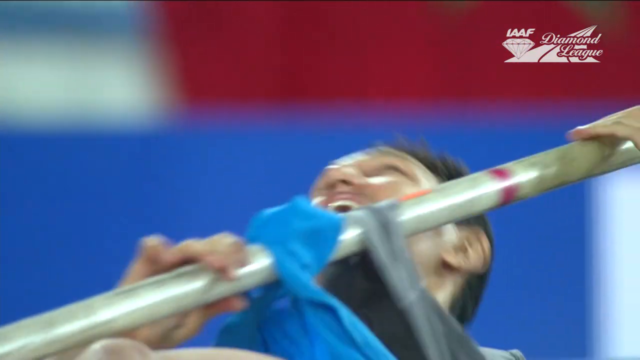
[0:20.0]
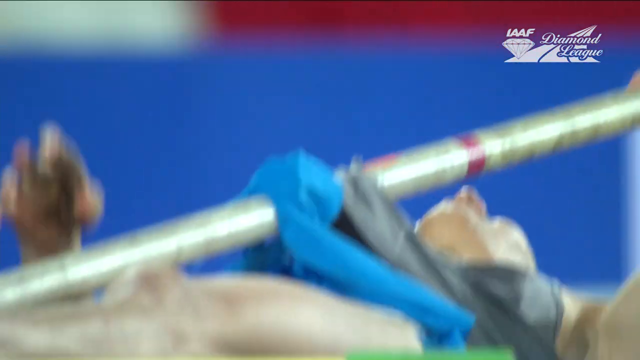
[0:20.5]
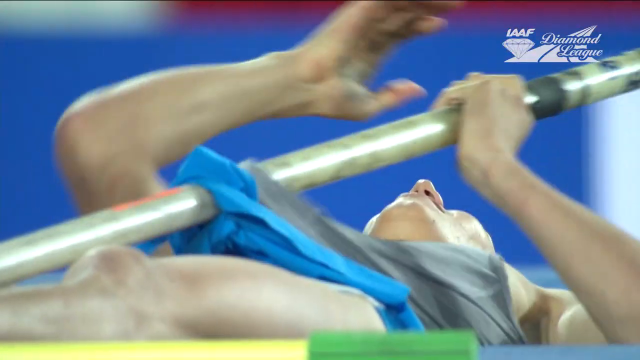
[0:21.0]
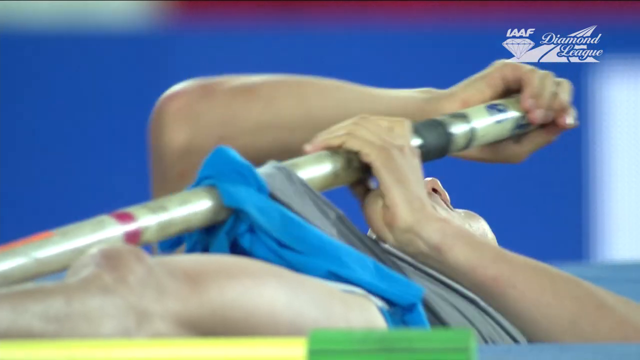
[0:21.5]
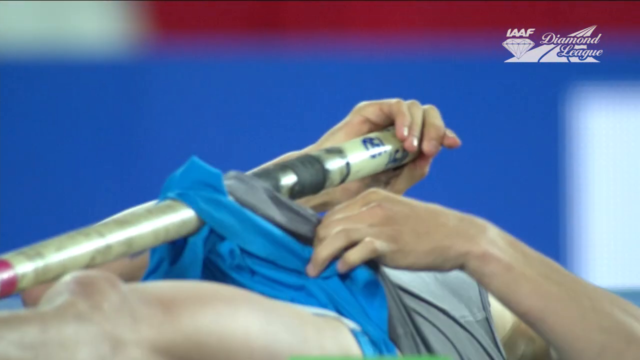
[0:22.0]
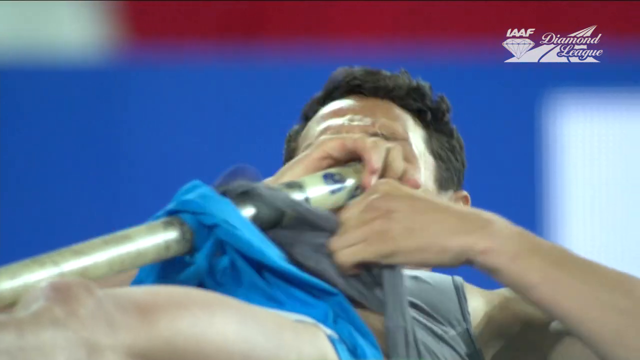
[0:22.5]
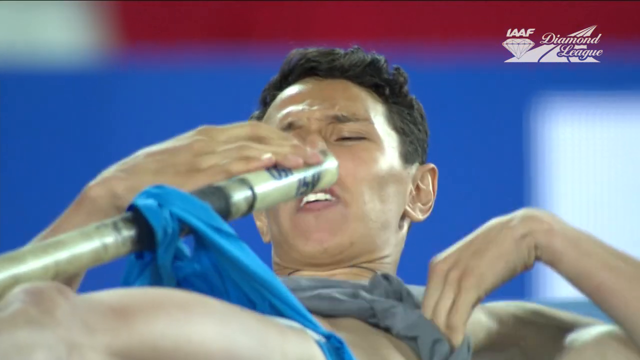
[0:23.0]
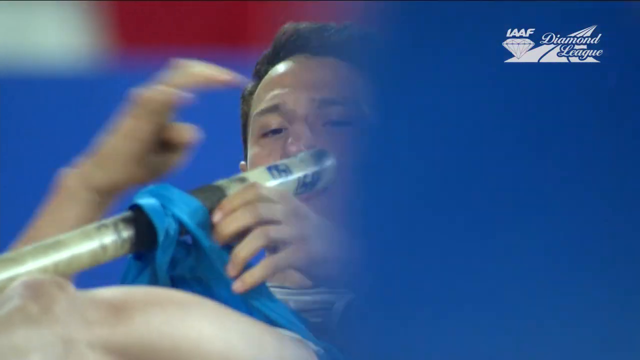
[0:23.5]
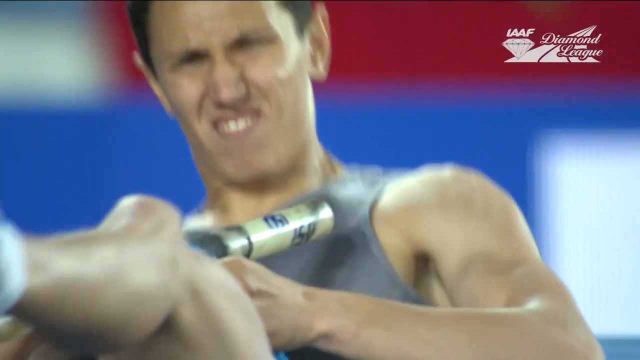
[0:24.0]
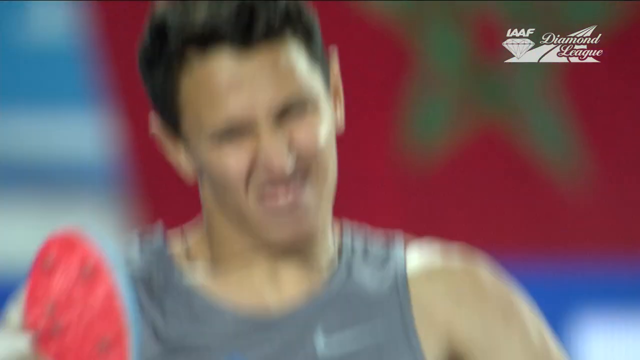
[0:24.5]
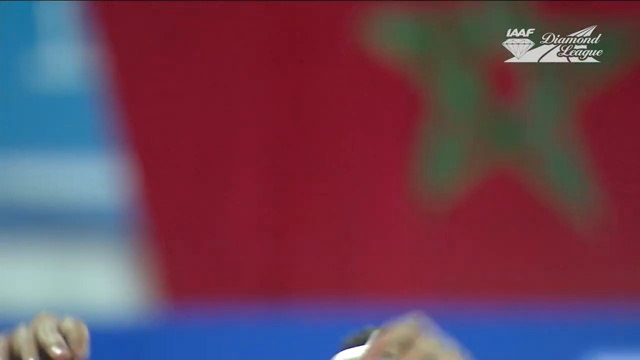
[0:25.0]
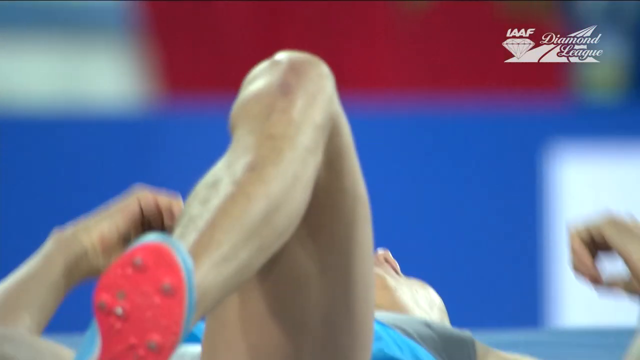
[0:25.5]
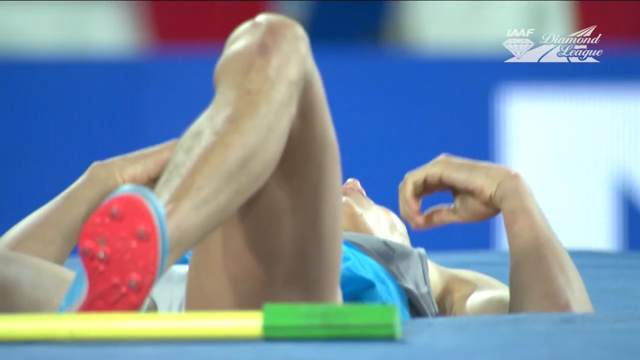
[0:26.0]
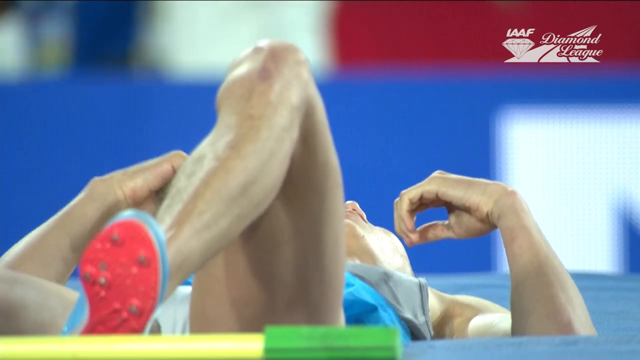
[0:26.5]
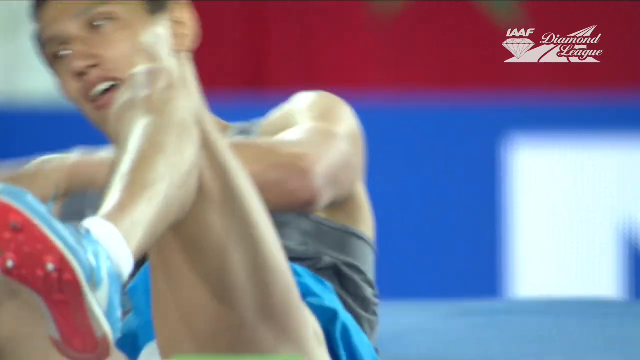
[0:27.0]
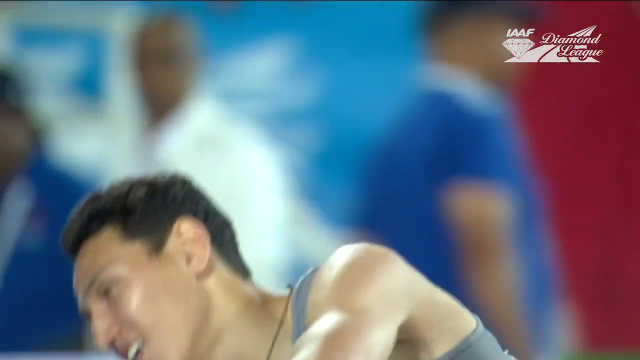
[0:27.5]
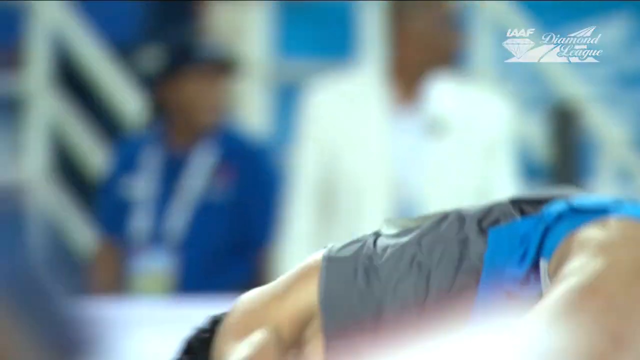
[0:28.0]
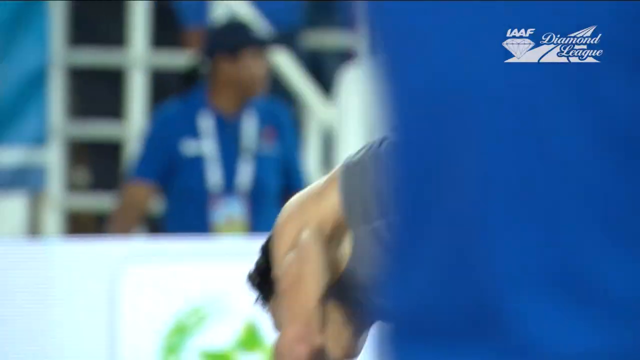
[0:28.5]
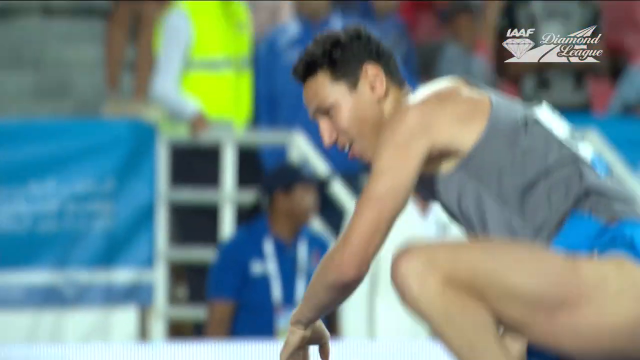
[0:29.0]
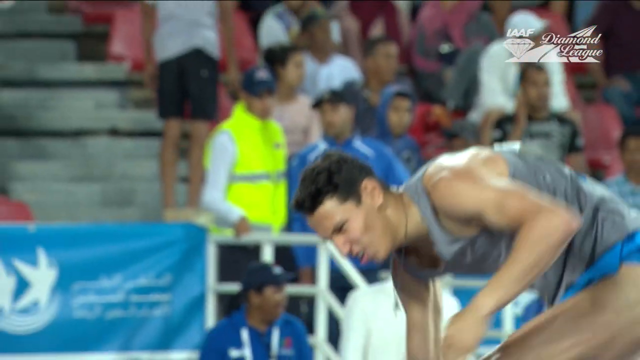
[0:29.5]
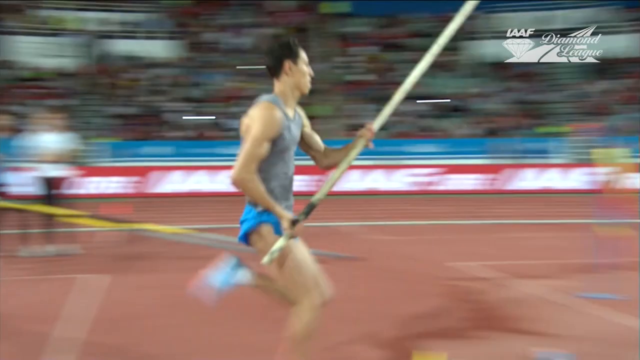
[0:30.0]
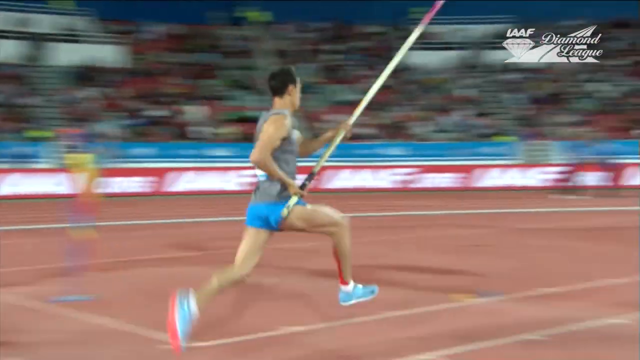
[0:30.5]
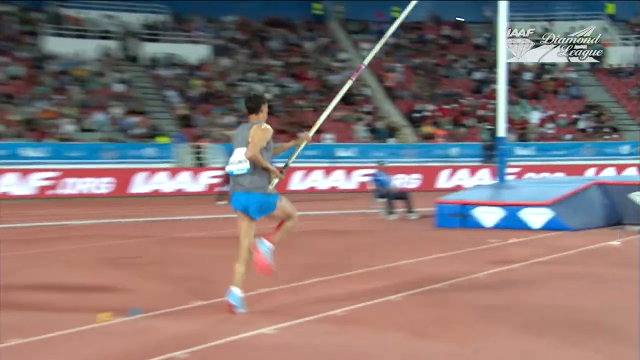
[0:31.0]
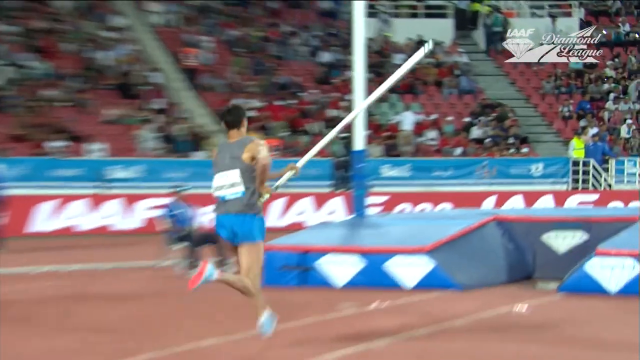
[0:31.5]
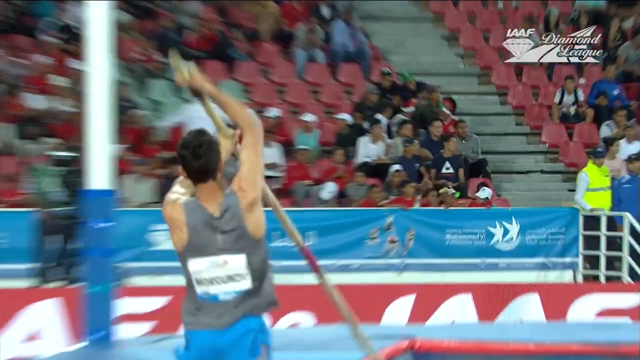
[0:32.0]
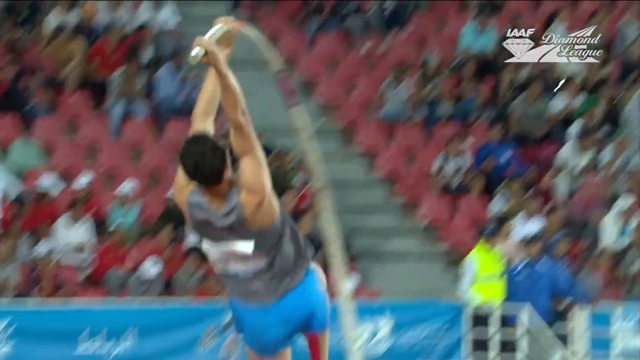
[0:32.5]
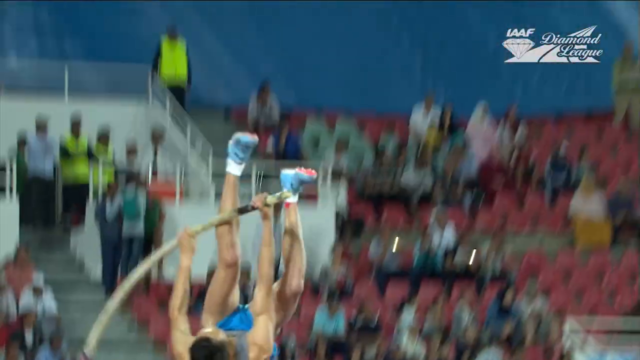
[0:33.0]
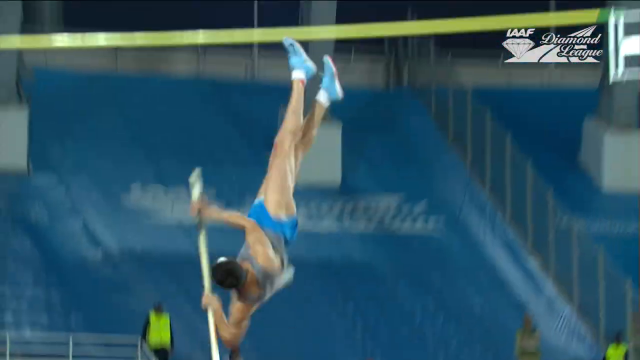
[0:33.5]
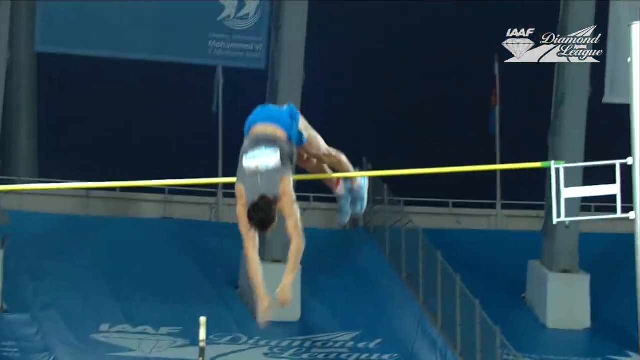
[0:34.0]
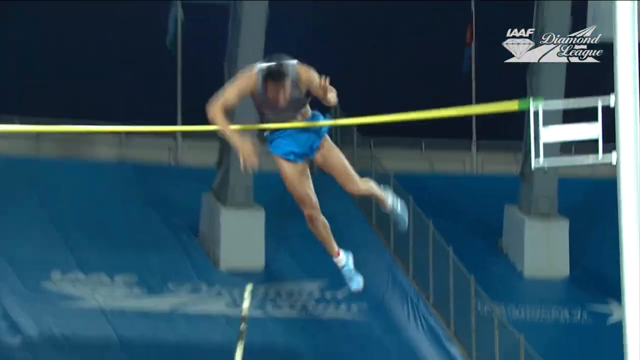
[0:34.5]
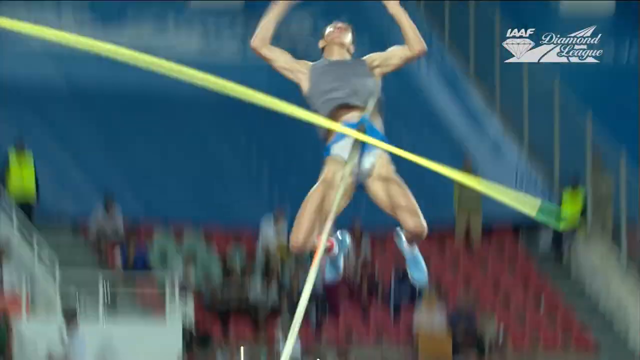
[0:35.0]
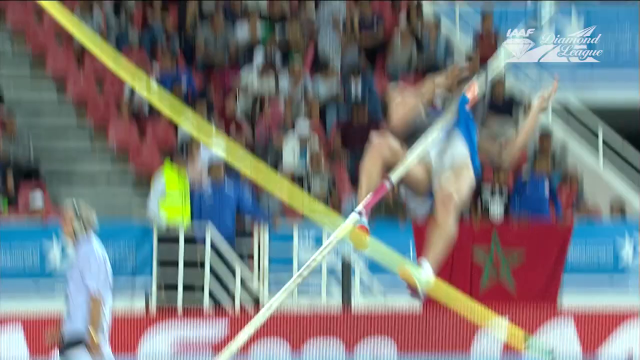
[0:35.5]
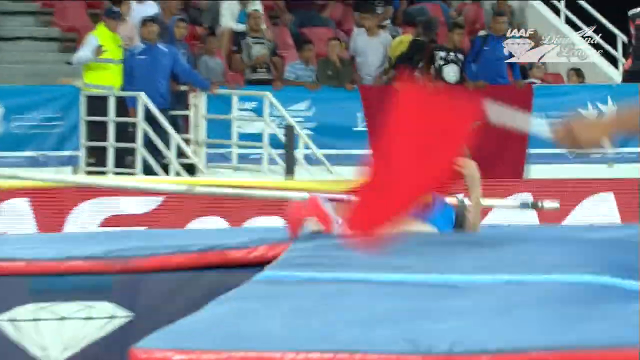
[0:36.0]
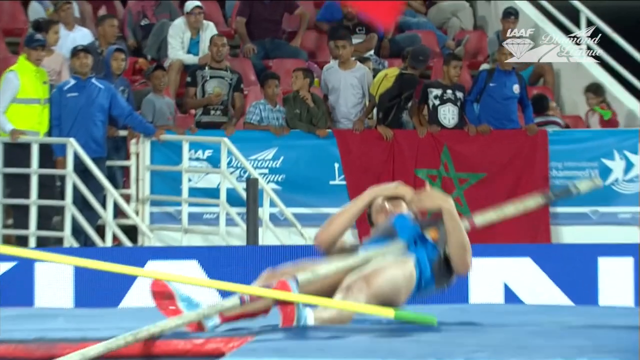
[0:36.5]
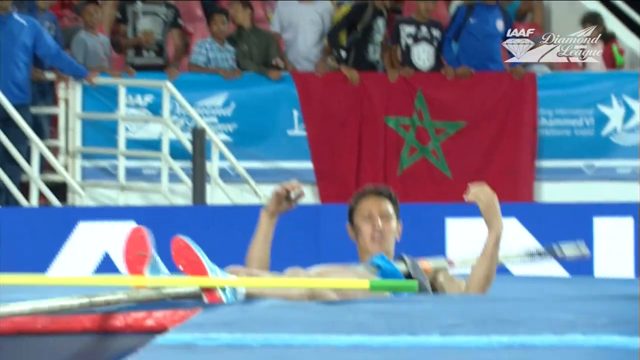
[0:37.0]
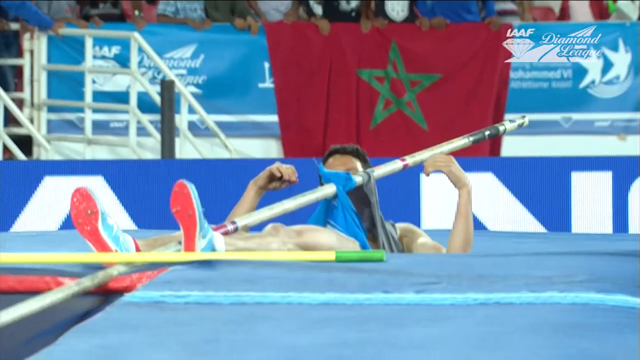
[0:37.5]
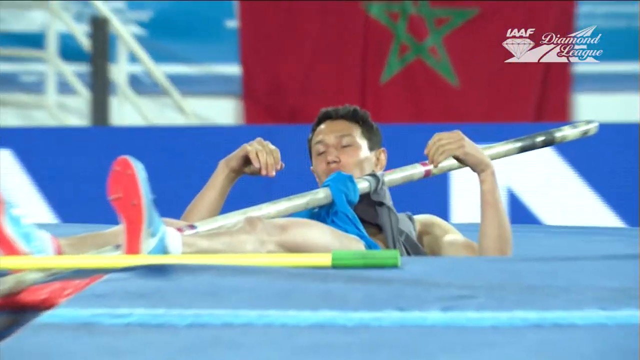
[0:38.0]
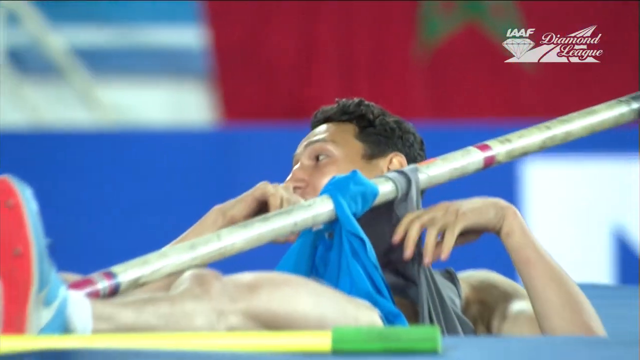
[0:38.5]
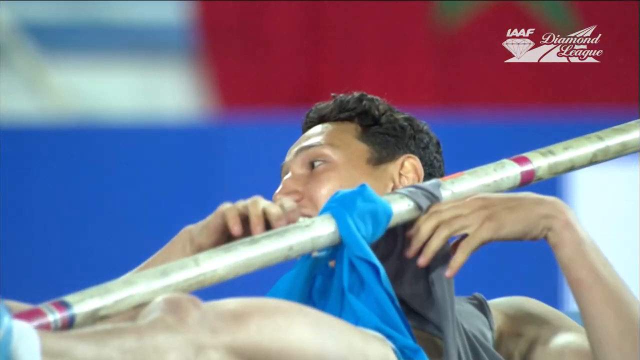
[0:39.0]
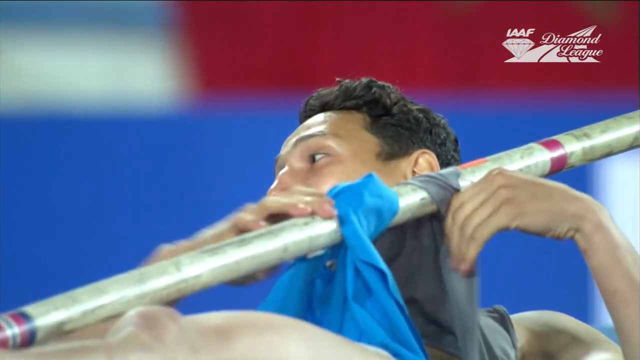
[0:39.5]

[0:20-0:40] The man of ambiguous nationality lies on the safety mat he crashed into after failing to clear the bar. The pole is in the middle of his shirt and the middle of his shorts; it looks like it pierced a hole in them. He laughs, seemingly at the pole missing actually piercing him, but the laugh fades as he sits in his disappointment and pulls his clothes off the pole that made the hole. He looks off to the side, laughs, and then just sits there as he pushes the pole down out of his clothing. He seems to be in pain as he sits up, collapses again, and then slowly makes his way back up. A replay shows him failing the vault: he strikes the pole into the ground, jumps, twists in the air, and knocks the bar down with his stomach.